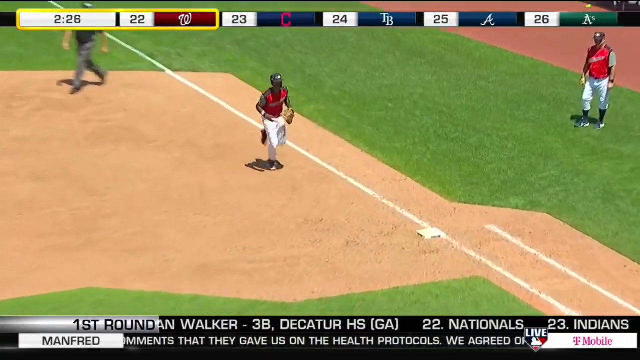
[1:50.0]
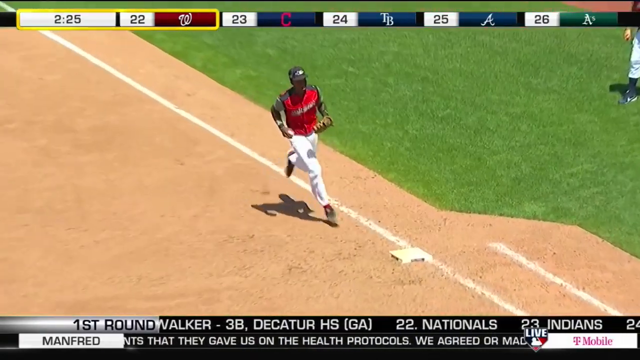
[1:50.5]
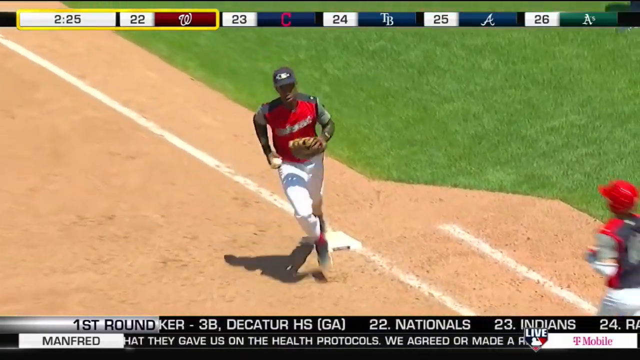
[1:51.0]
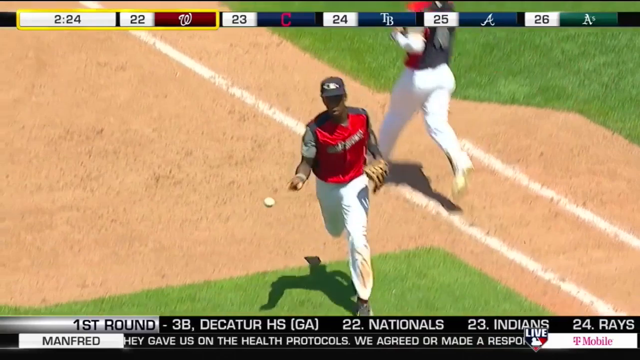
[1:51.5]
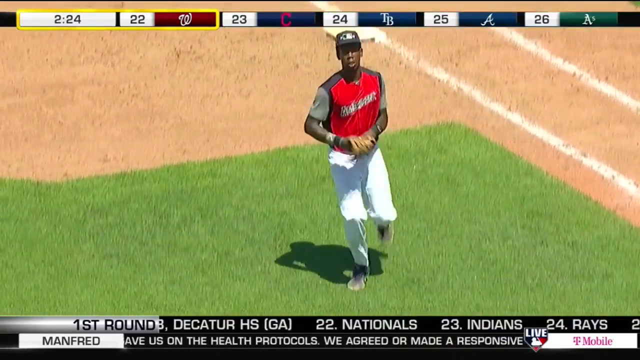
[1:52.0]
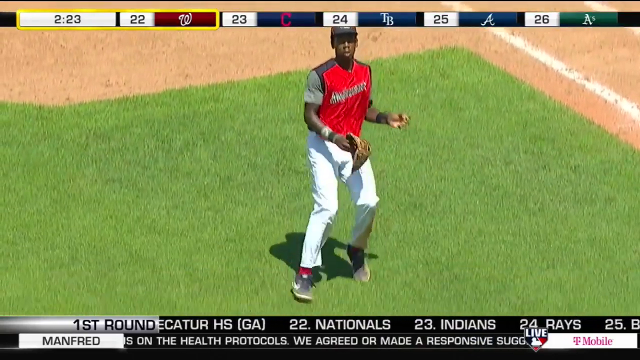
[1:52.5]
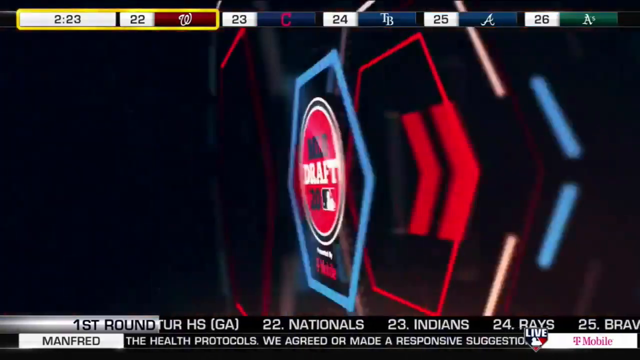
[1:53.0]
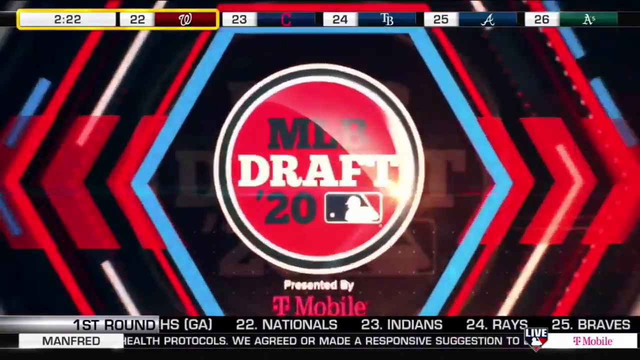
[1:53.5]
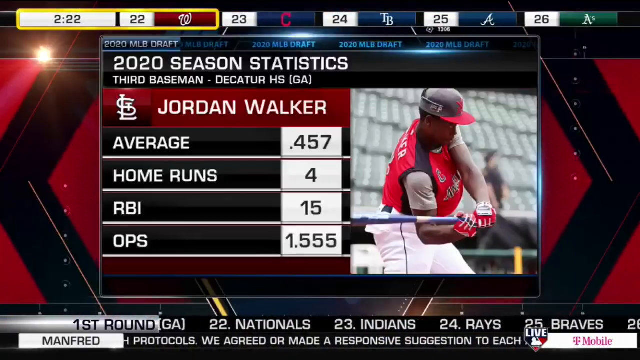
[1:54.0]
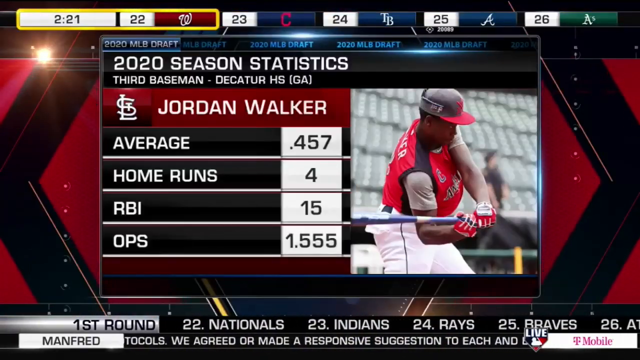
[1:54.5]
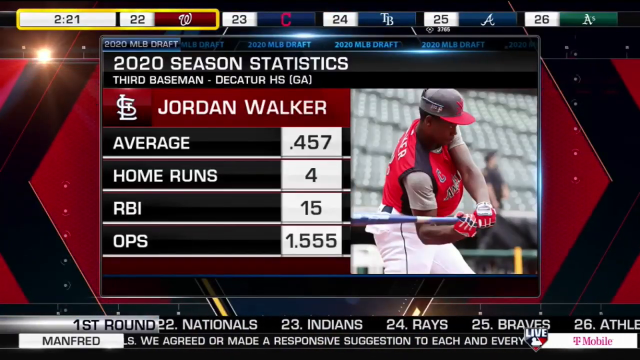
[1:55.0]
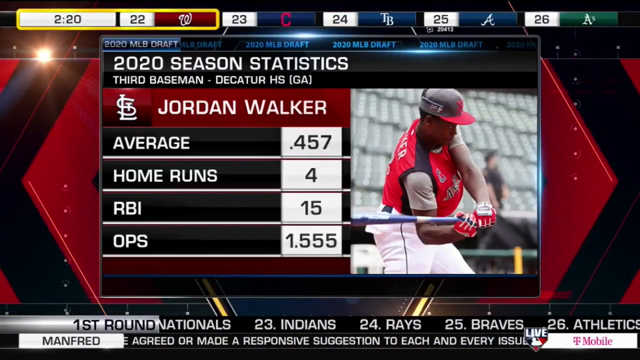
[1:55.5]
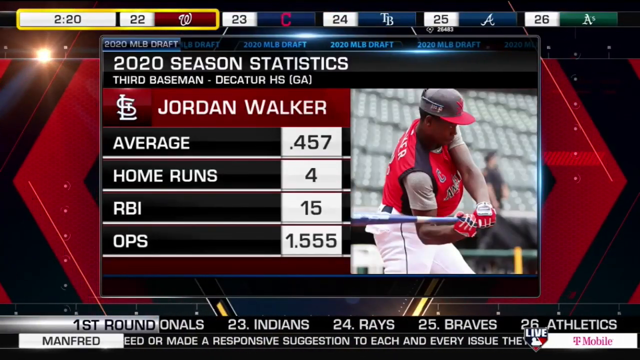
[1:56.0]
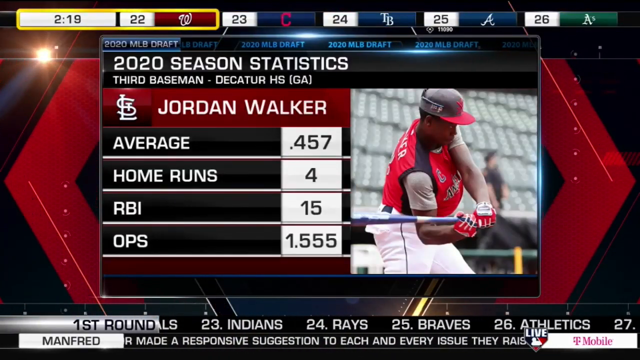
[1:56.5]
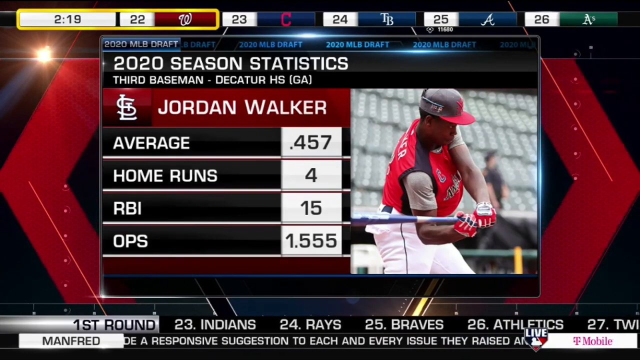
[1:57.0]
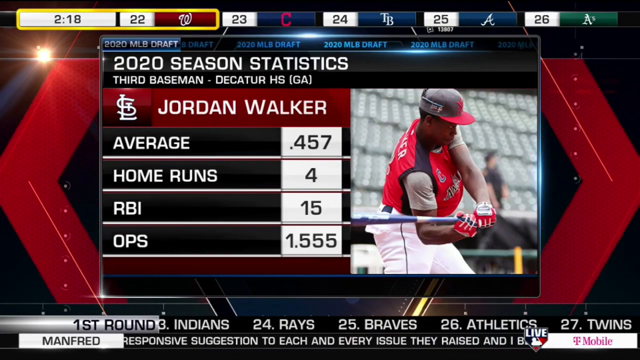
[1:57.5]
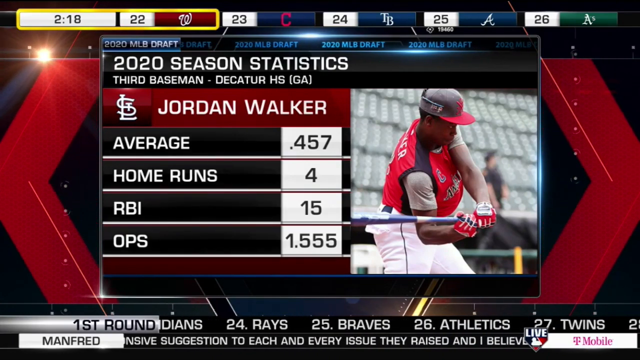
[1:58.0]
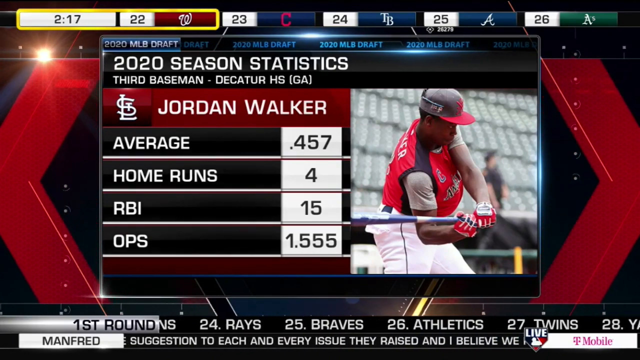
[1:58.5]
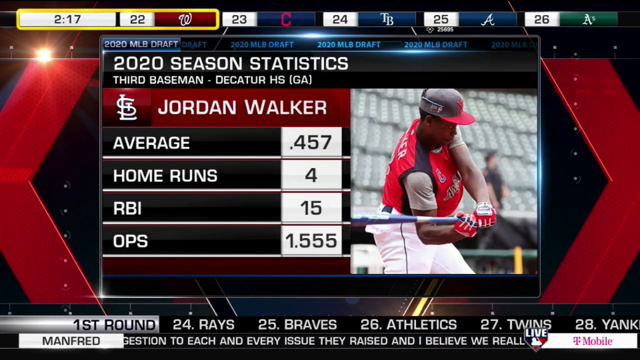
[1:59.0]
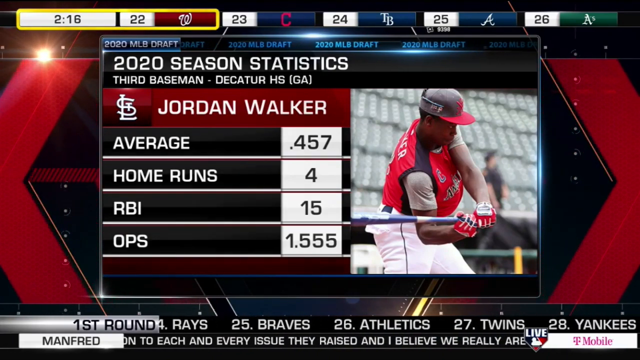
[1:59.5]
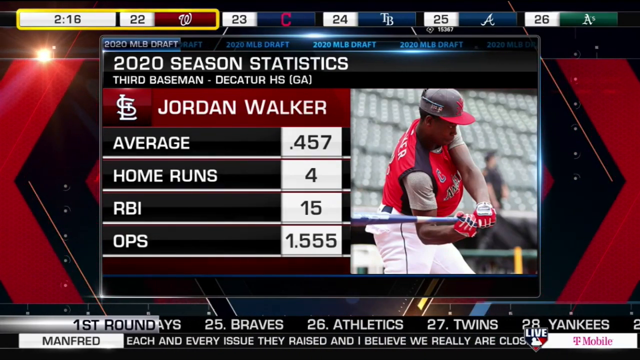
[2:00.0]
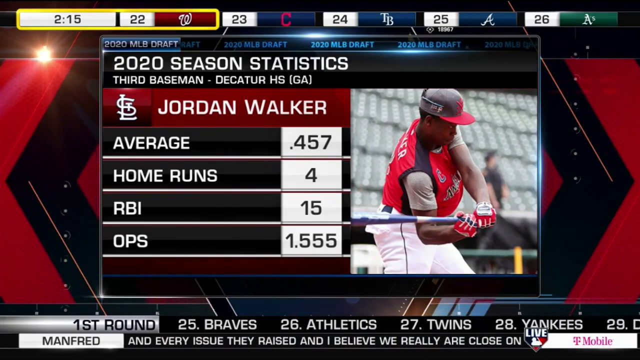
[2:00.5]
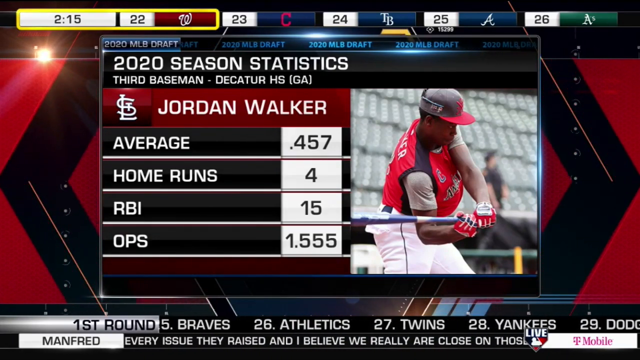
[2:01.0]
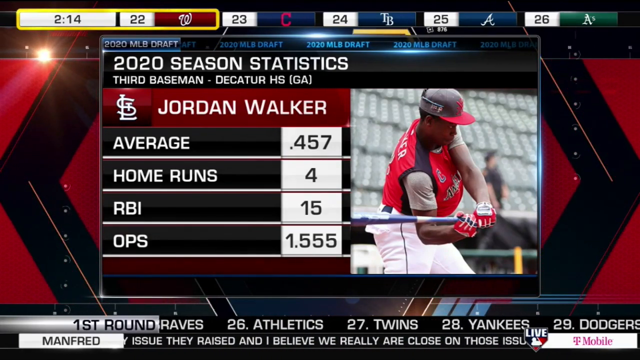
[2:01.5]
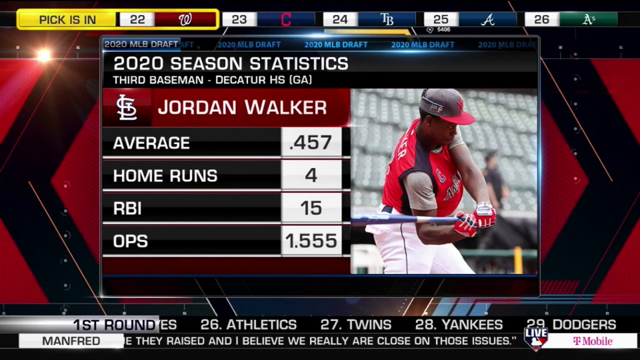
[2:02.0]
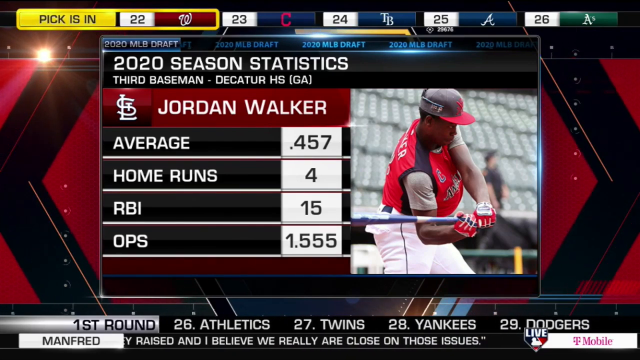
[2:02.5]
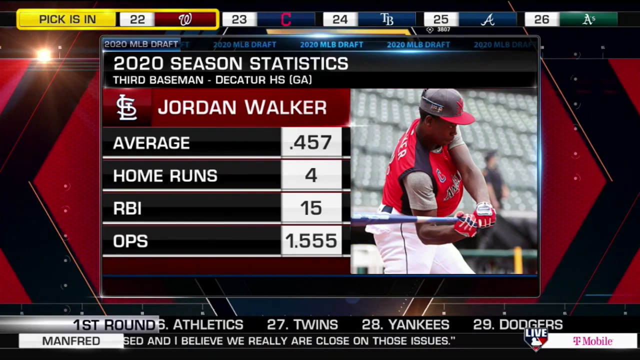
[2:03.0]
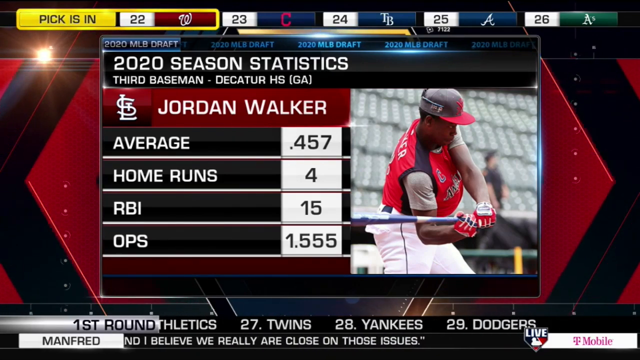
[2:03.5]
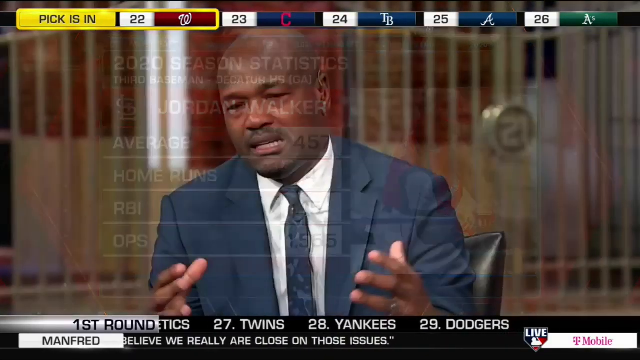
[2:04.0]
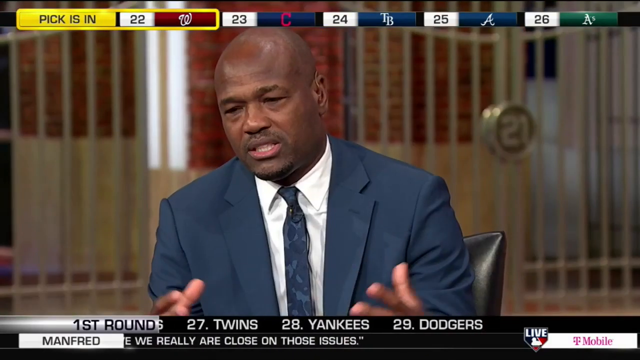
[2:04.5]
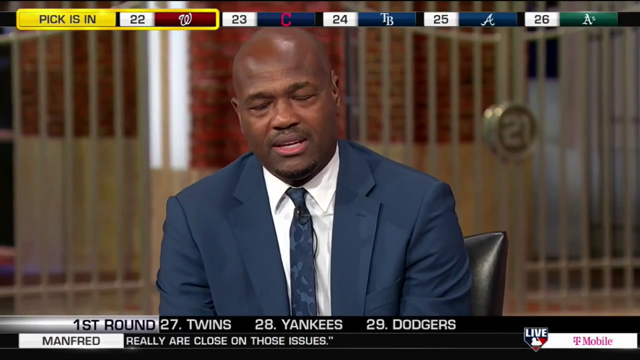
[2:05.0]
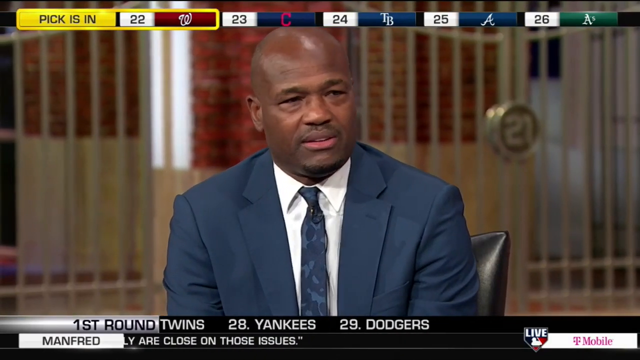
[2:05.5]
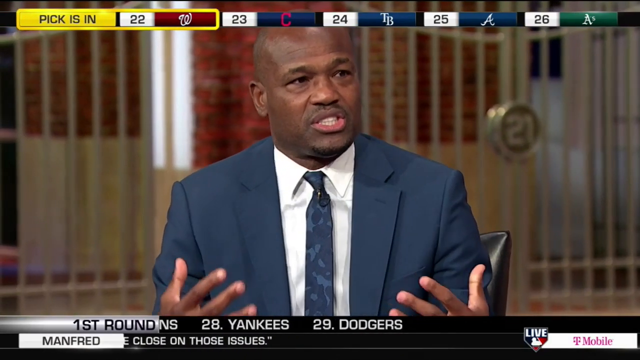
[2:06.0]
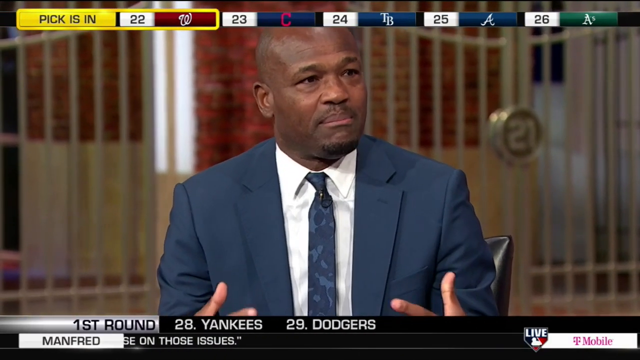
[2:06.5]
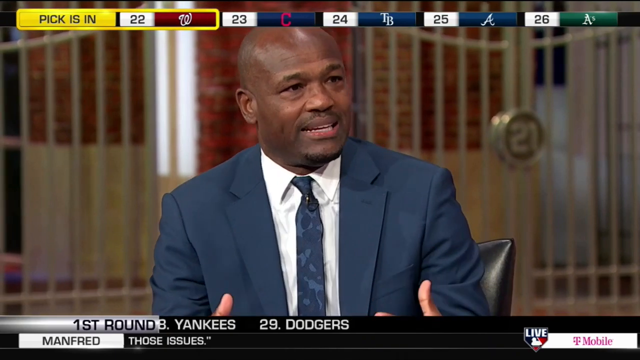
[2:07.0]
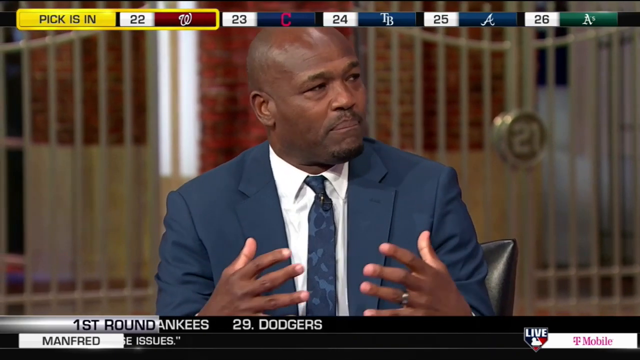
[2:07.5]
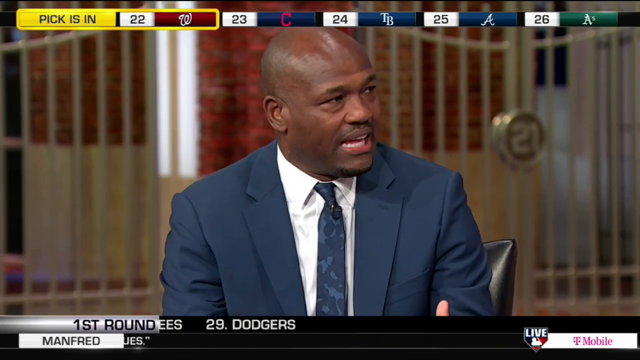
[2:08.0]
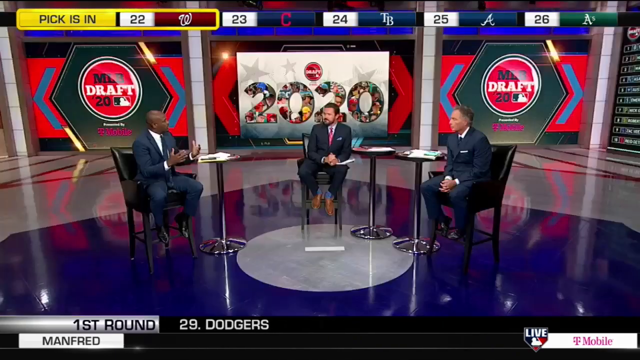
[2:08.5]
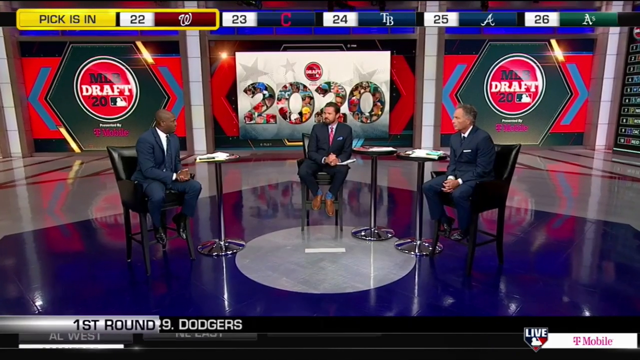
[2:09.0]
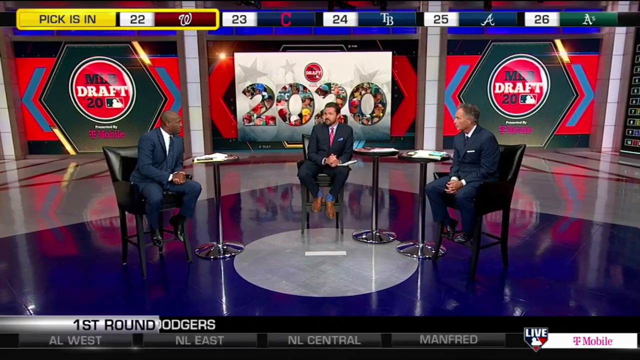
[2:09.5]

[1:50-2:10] Walker is in the field at first base, running to make the play at first as the batter crosses the bag. A spinning MLB draft graphic is followed by a baseball-card-like image of Walker, this time a side view of him batting. It reads "2020 season statistics, third baseman from Decatur High School Jordan Walker," with an average of 457 and other stats on home runs, RBI and on-base percentage. The video cuts to a bald man with dark skin and the shadow of a goatee, wearing a navy blue suit and navy blue tie; it looks like he is discussing what he just saw. He sits up a little taller in his chair and gestures with both hands as he continues to speak and nod. The shot widens to show two other men sitting on tall chairs in the MLB draft studio. All three men wear dark suits; the one in the center has a red tie and a beard, and the one on the right has a dark tie and is clean-shaven.